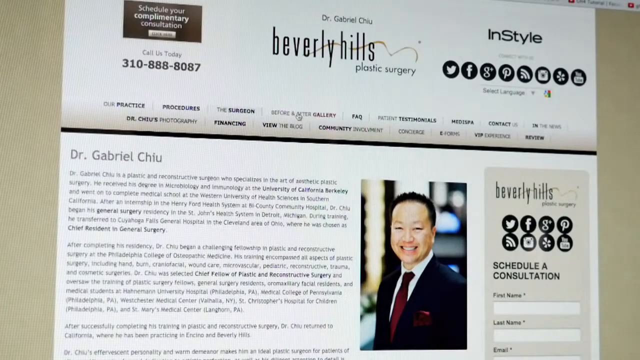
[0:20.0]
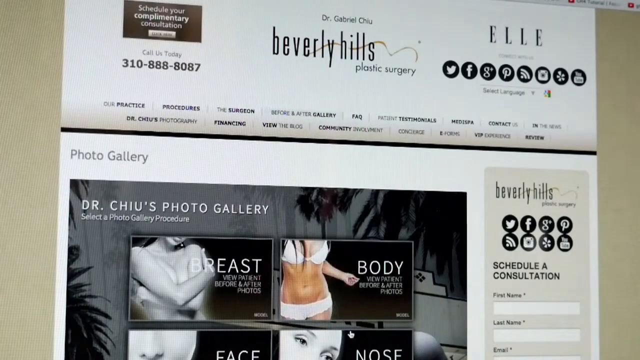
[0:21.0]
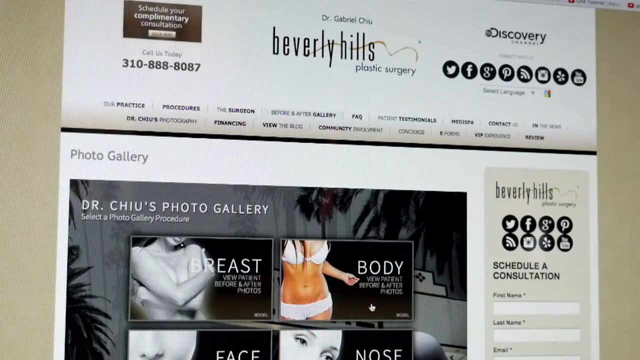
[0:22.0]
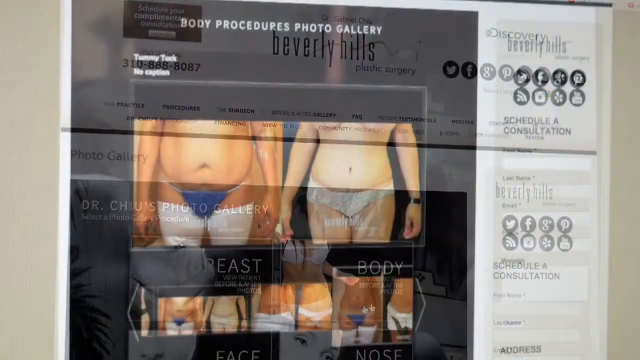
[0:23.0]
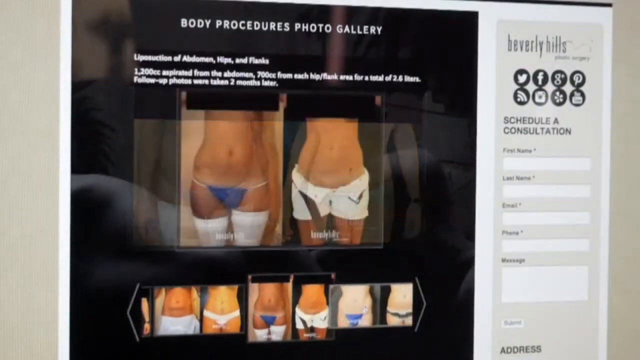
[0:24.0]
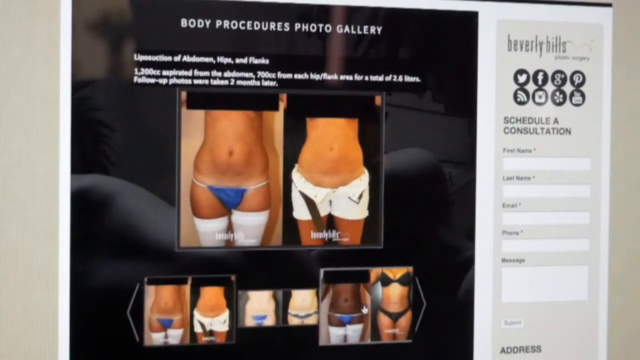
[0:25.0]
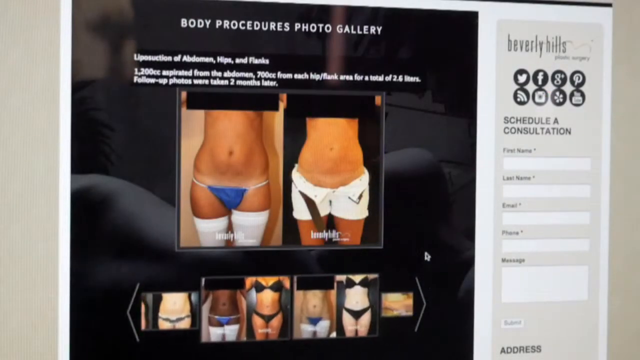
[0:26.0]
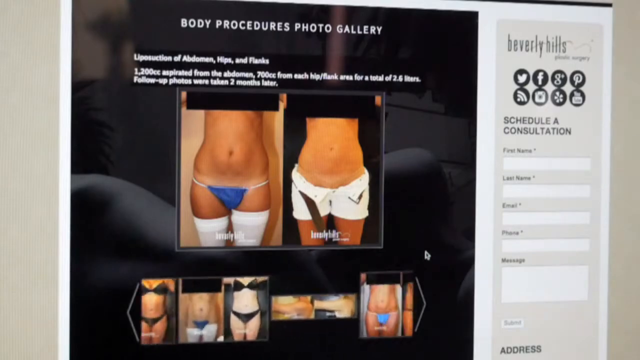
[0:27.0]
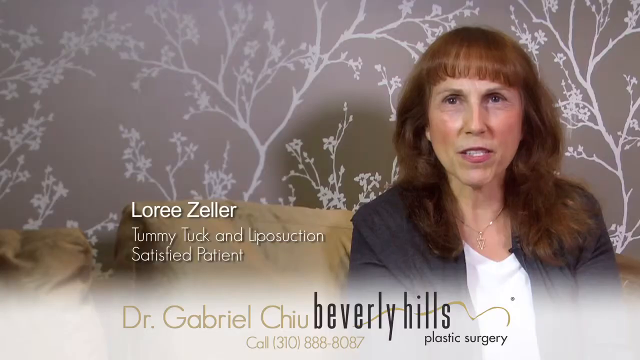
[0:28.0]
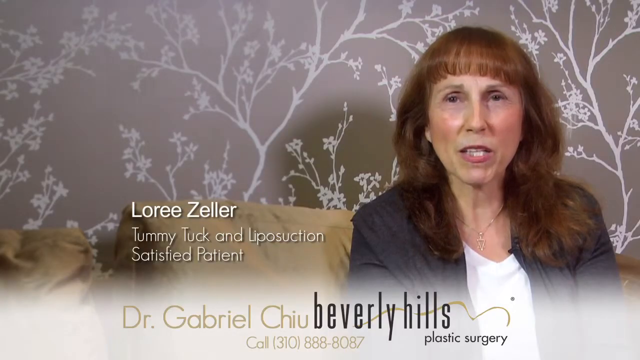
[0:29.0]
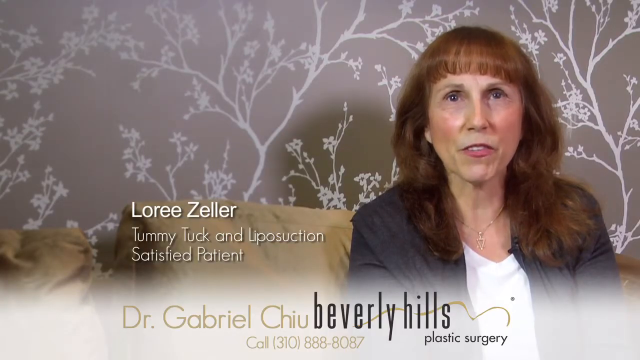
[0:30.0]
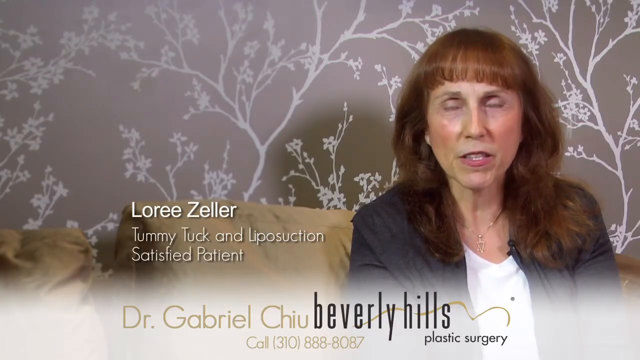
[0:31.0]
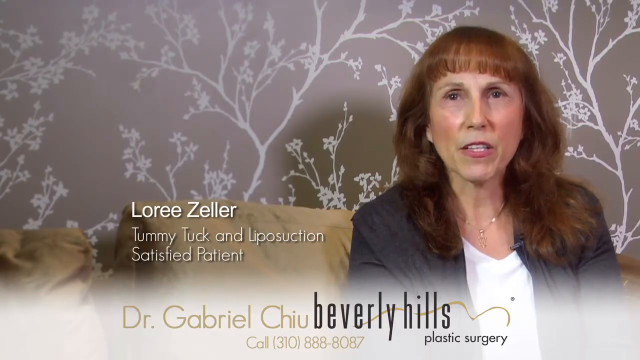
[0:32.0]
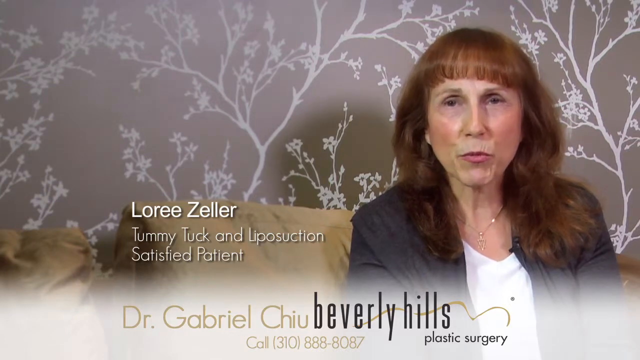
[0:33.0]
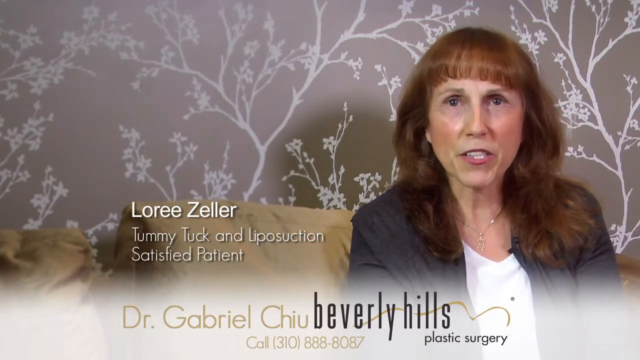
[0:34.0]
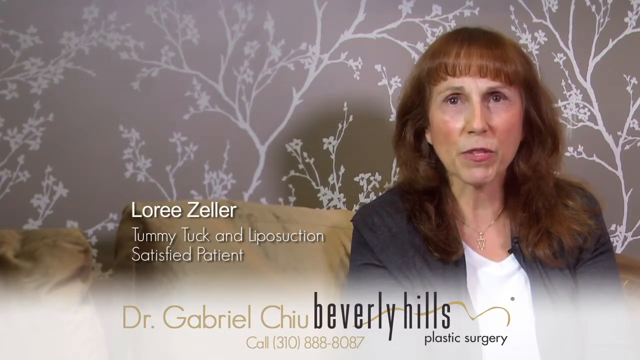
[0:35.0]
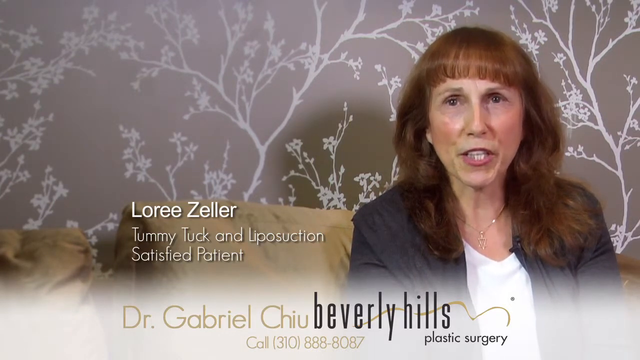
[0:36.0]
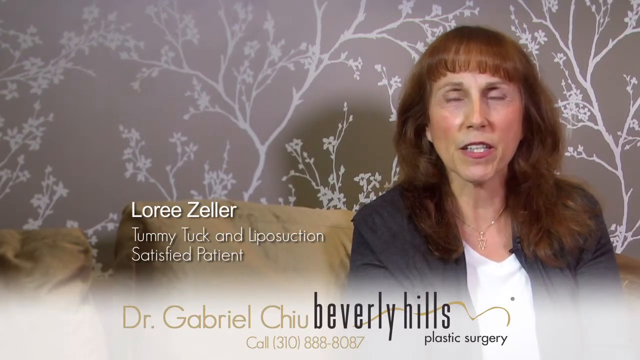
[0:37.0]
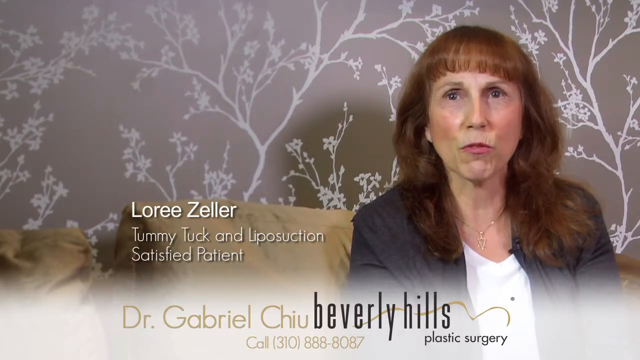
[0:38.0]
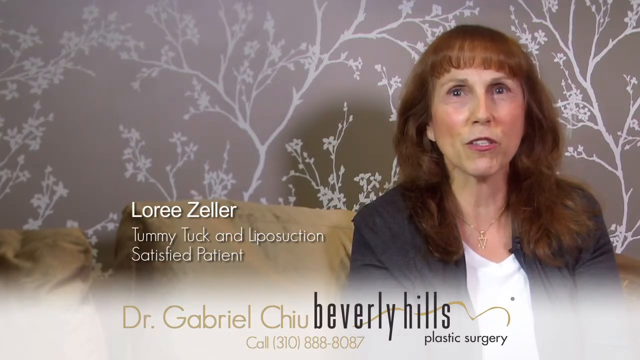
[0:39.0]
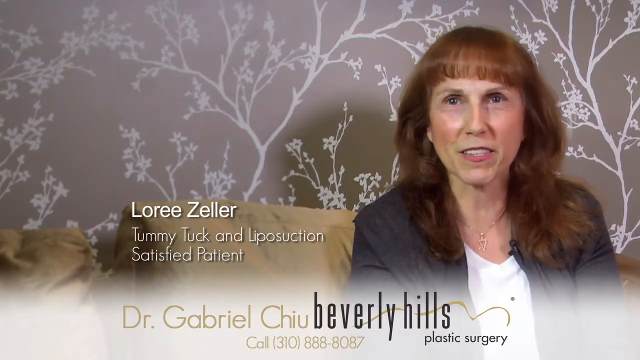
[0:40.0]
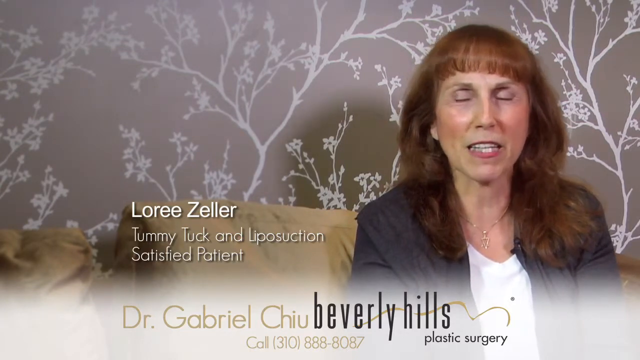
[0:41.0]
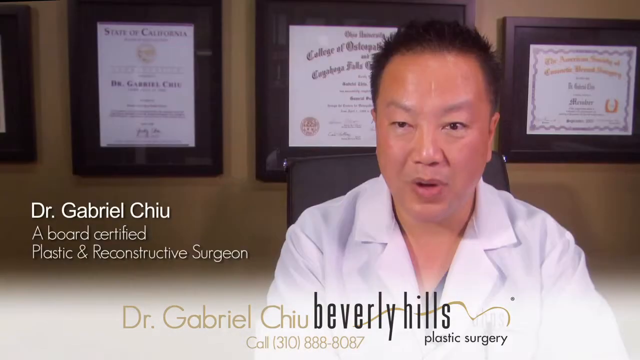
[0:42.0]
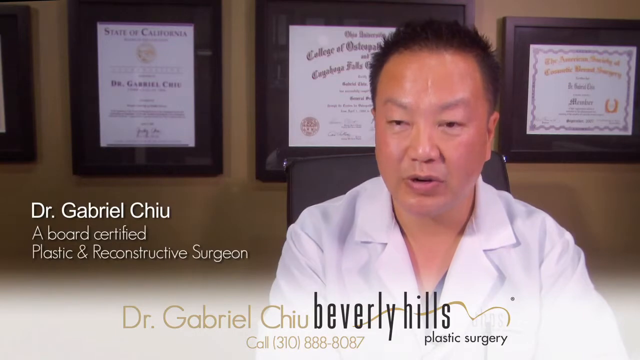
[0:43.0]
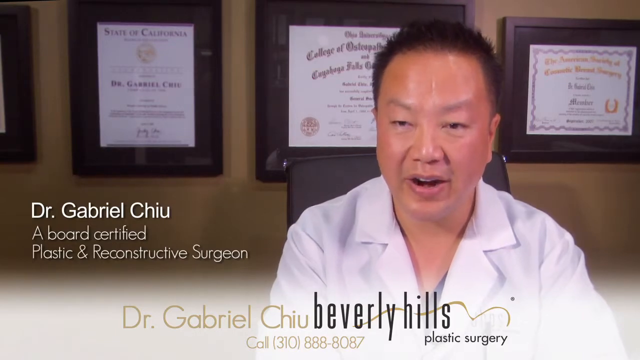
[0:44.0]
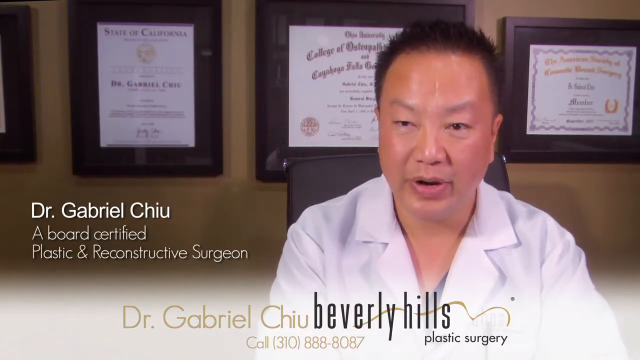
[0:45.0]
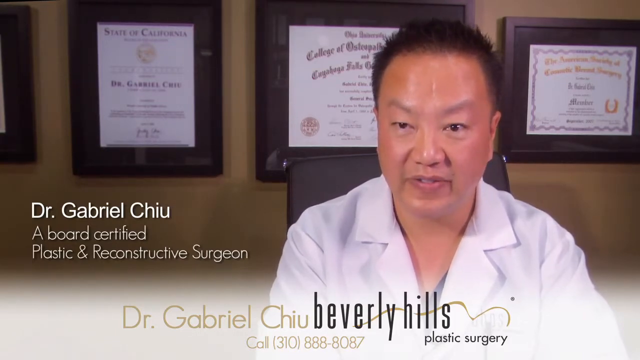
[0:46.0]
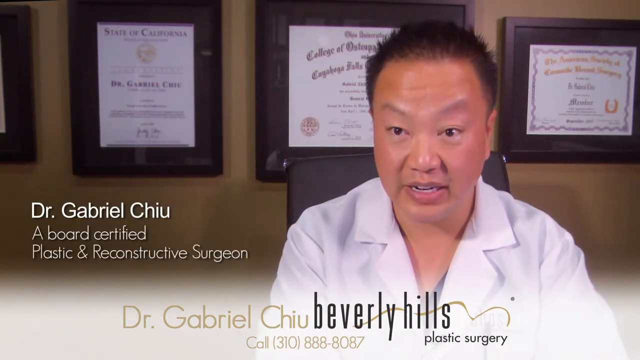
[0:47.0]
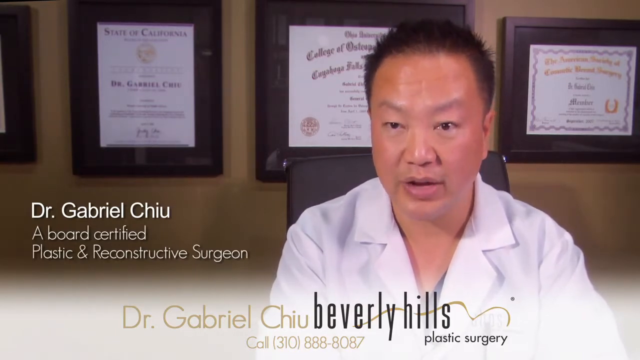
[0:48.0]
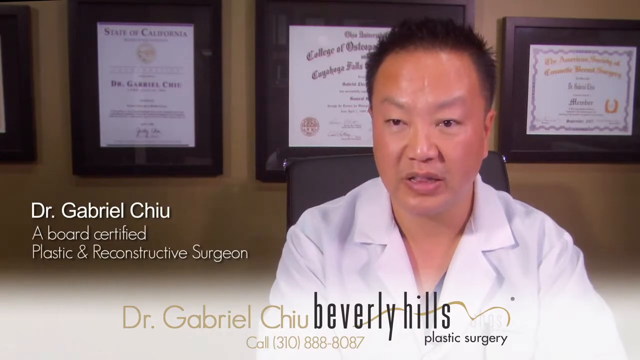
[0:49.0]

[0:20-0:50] The Beverly Hills Plastic Surgery website appears, showing transformation pictures: before-and-after images. The page is titled "Body Procedures Photo Gallery" and includes before-and-after pictures of someone's liposuction. The video cuts back to the interview with Lori Zeller, the tummy tuck and liposuction patient. She has below-shoulder-length brown hair with a fringe, is likely in her late 50s or early 60s, wears a white t-shirt with a black jacket, and is sitting on a brown sofa as she describes her experience with the clinic. Text at the bottom of the screen reads "Dr. Gabriel Chiu, Beverly Hills Plastic Surgery" along with a phone number. The video then cuts to an interview with Dr. Gabriel Chiu himself, the surgeon.